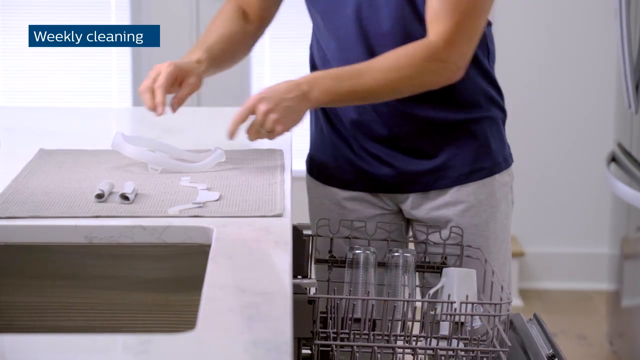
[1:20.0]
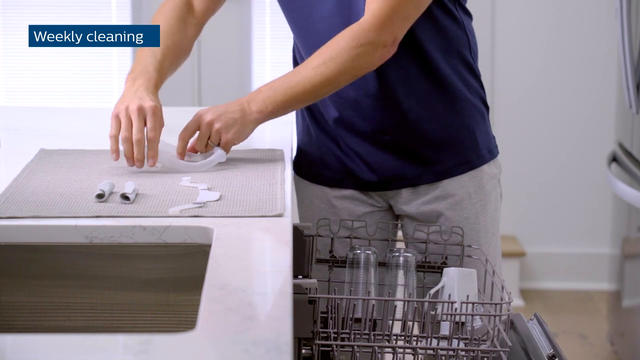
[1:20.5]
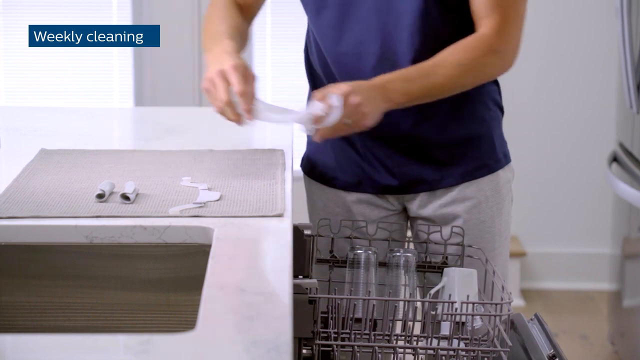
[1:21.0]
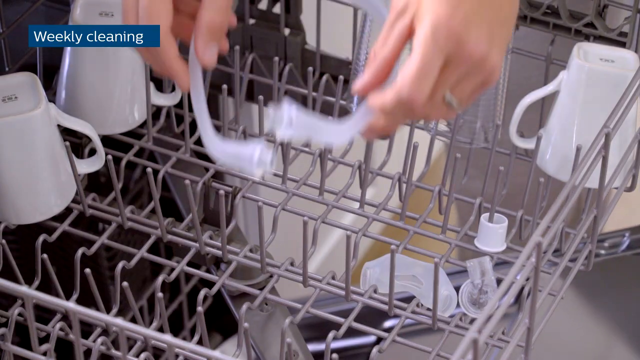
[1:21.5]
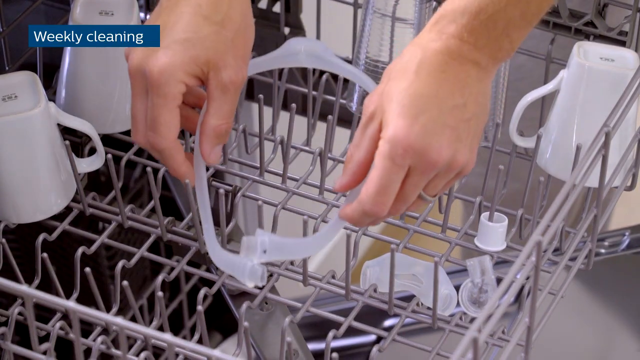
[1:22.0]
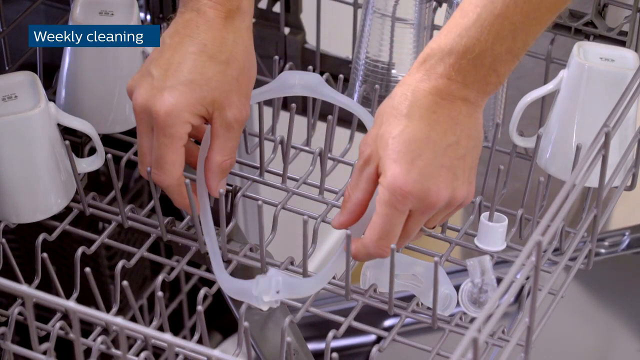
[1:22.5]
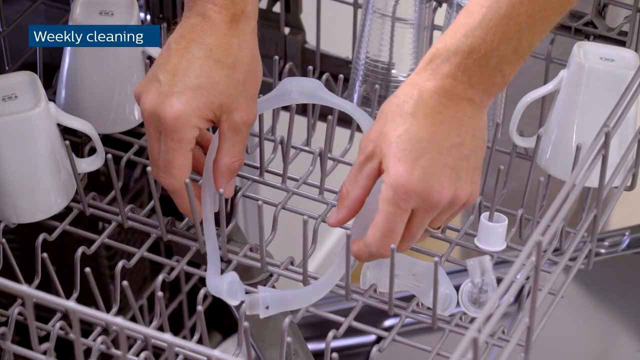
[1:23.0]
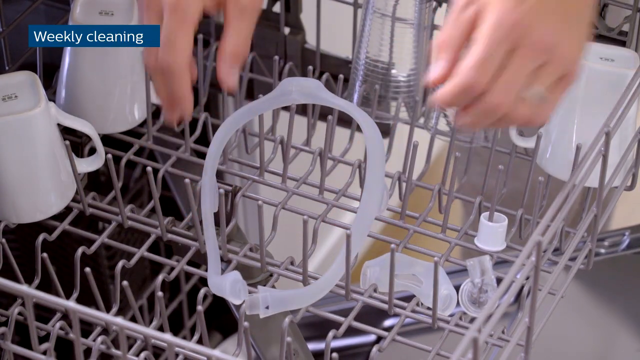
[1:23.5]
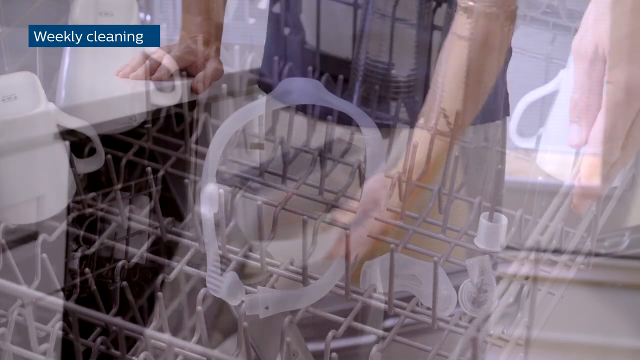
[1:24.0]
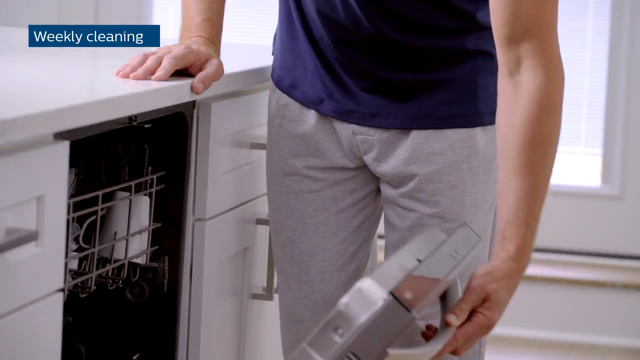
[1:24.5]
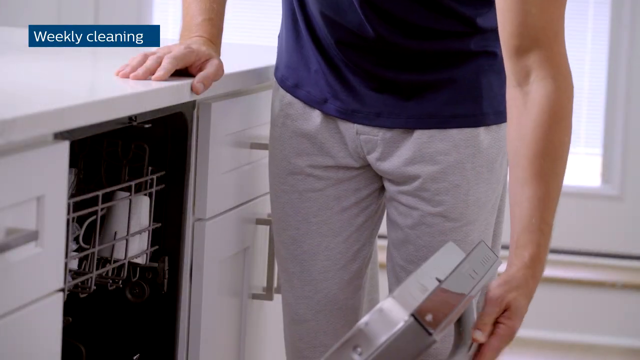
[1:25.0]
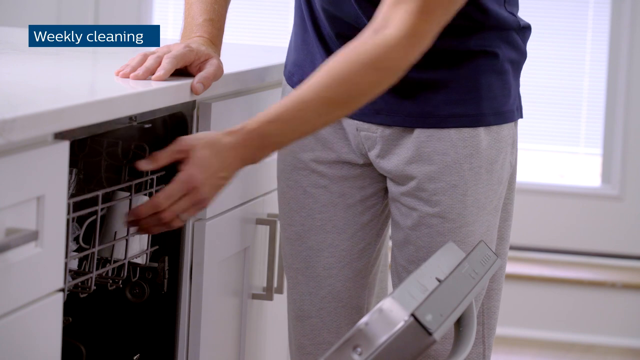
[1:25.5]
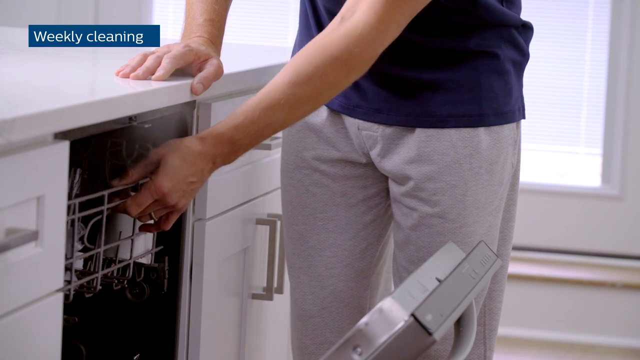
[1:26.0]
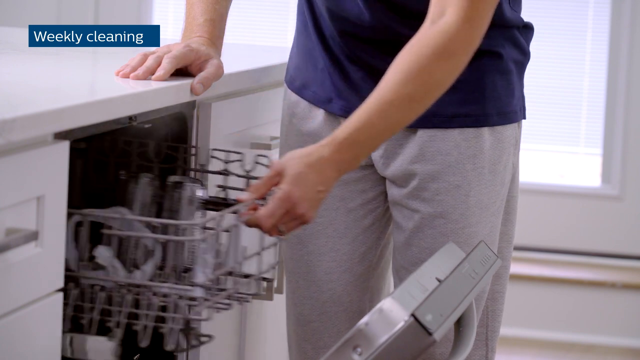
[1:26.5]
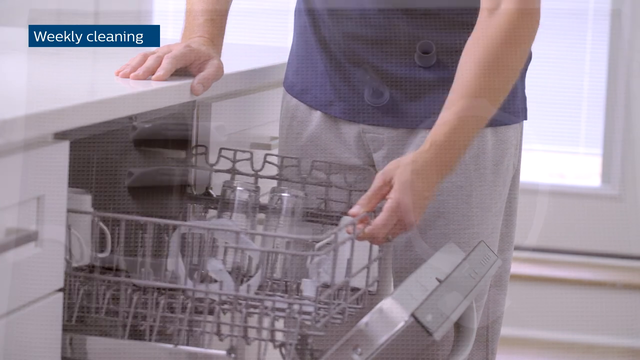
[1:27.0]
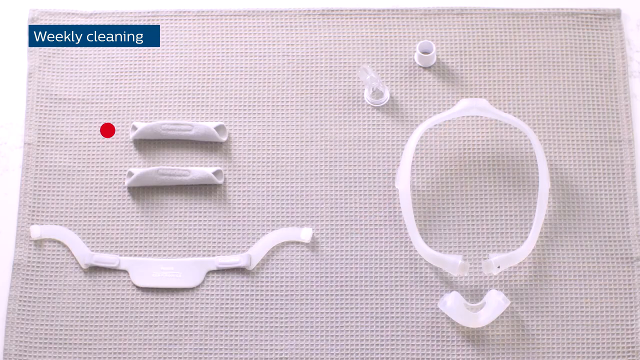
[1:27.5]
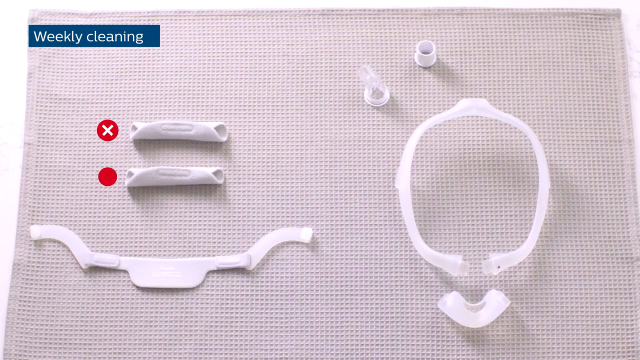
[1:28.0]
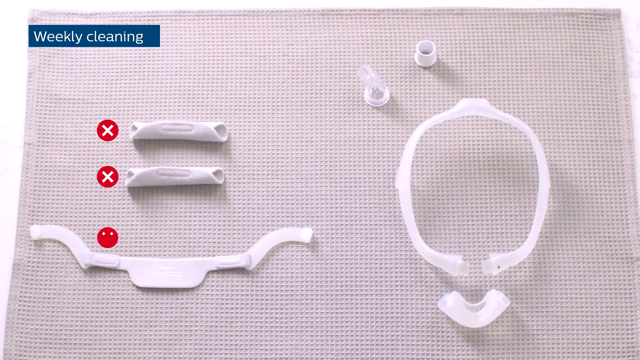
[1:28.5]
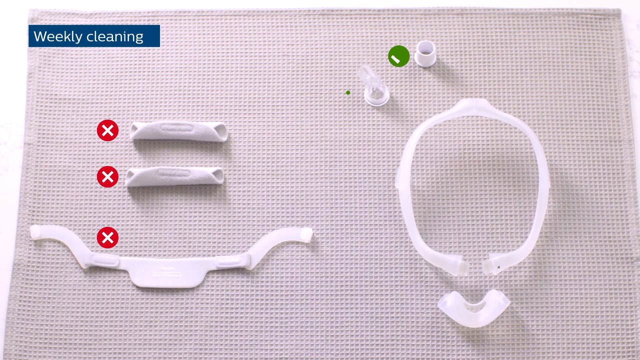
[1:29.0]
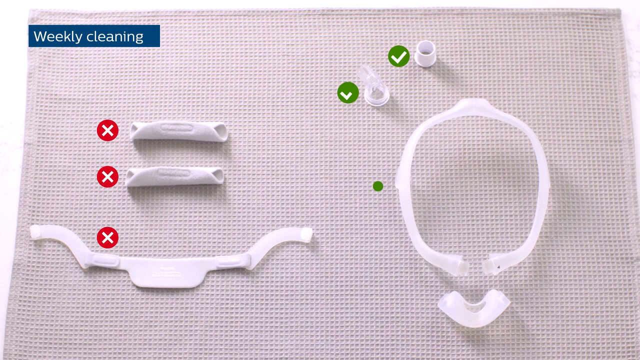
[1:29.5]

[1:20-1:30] The man puts more parts of the mask into the dishwasher, lifting one up and putting it in. A closer shot shows the dishwasher where he has placed it, and he pulls the dishwasher back out by the handle. Next, many of the parts are laid out on some sort of mat, with an indication of which parts are to be cleaned in this process and which are not; apparently the larger, sort of plastic parts are cleaned while the more solid white parts are kept away, so only about half the parts are cleaned. Later, he appears to set up some sort of bowl to clean more parts.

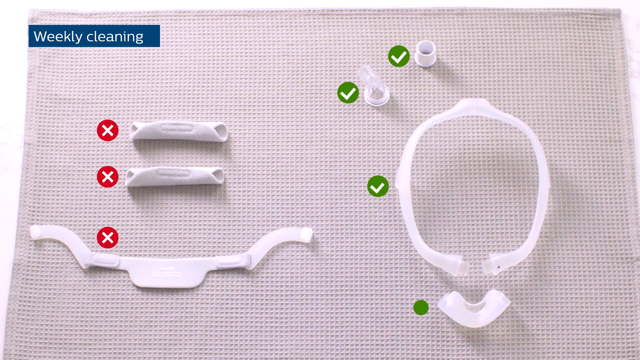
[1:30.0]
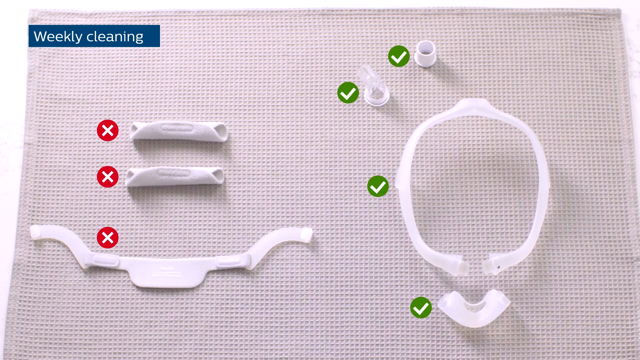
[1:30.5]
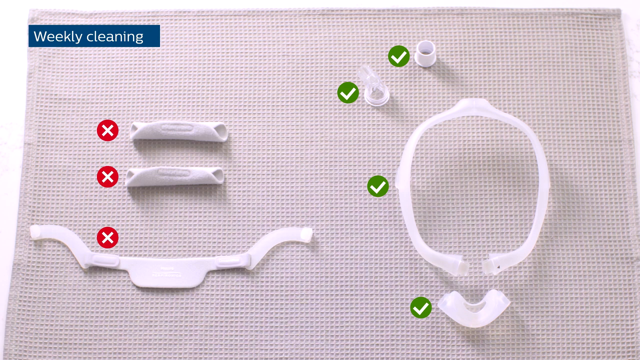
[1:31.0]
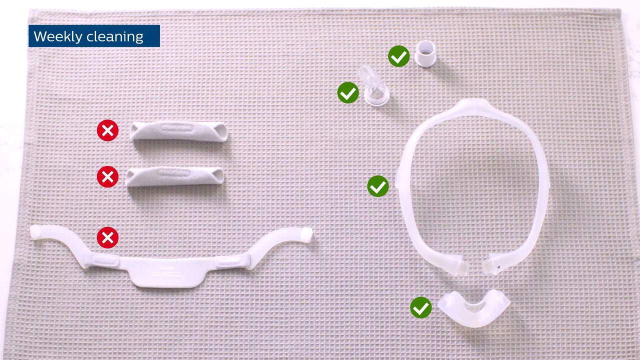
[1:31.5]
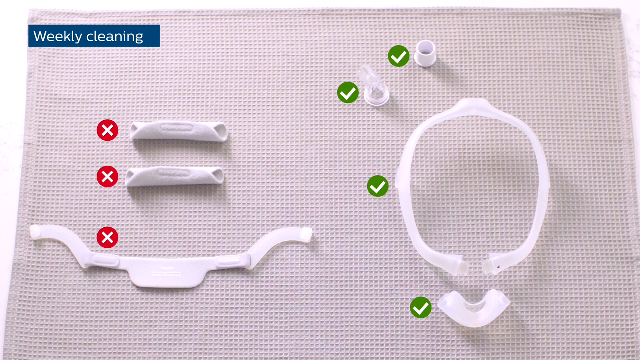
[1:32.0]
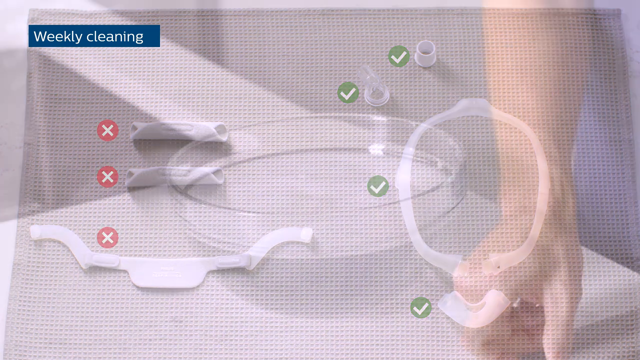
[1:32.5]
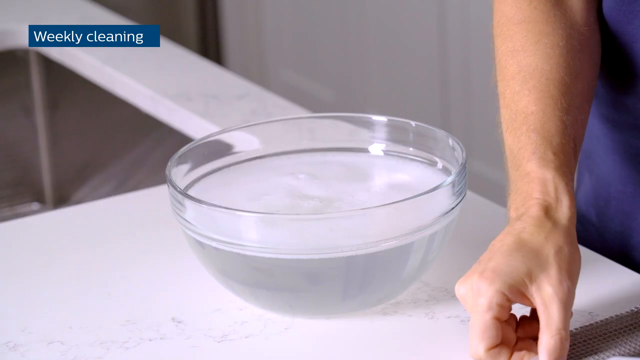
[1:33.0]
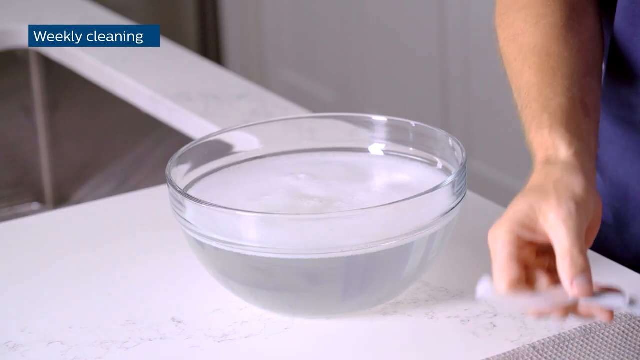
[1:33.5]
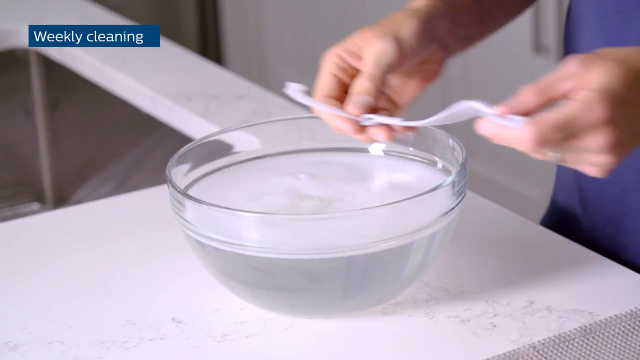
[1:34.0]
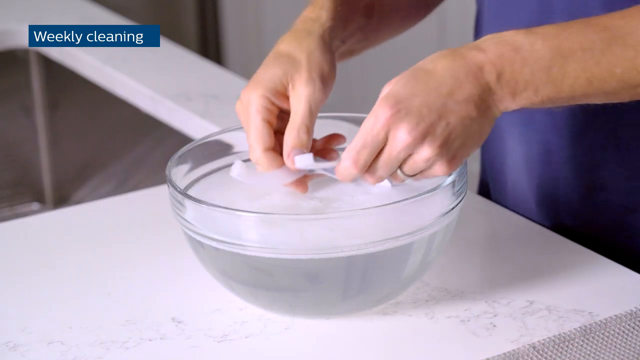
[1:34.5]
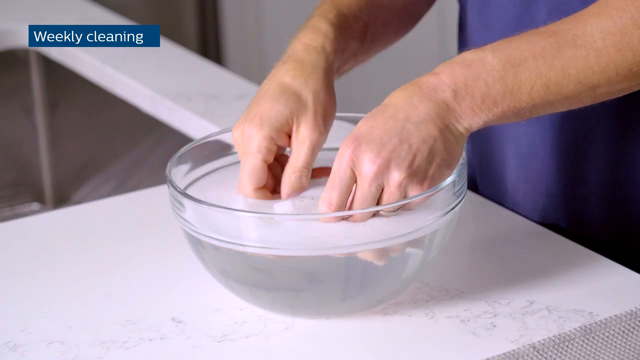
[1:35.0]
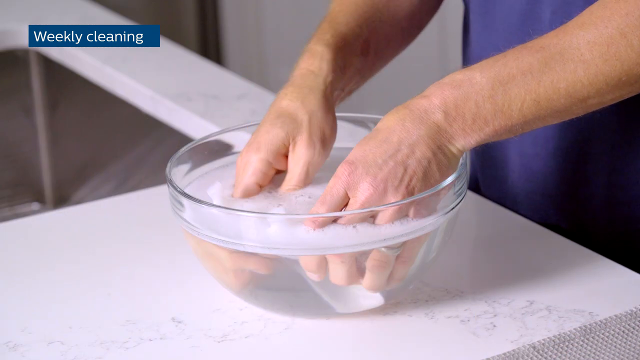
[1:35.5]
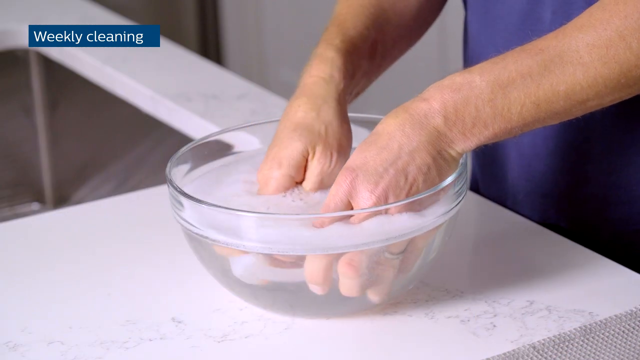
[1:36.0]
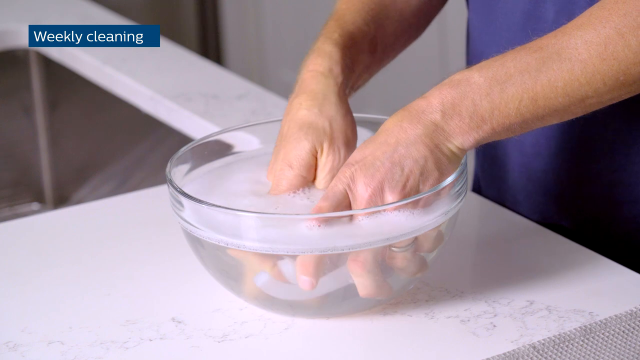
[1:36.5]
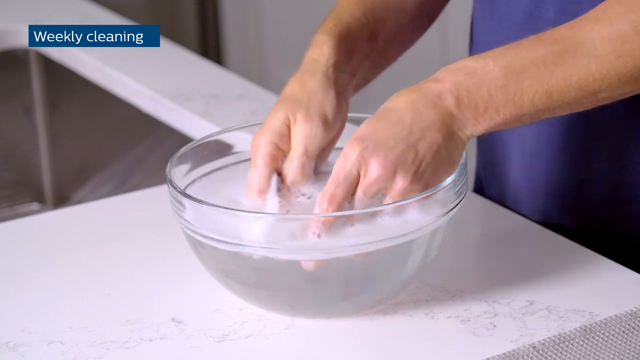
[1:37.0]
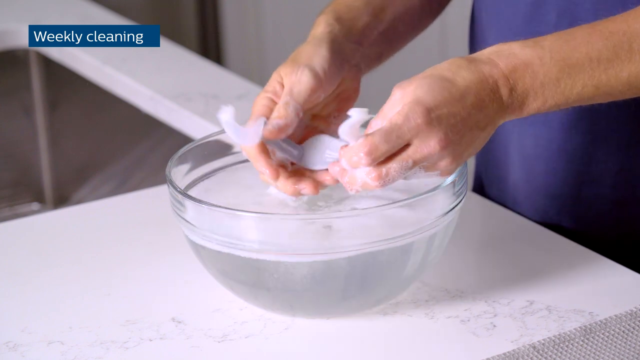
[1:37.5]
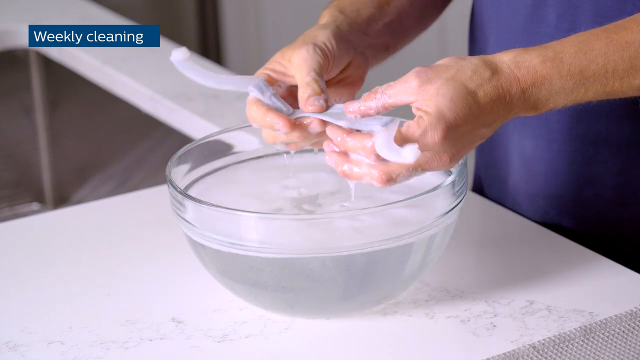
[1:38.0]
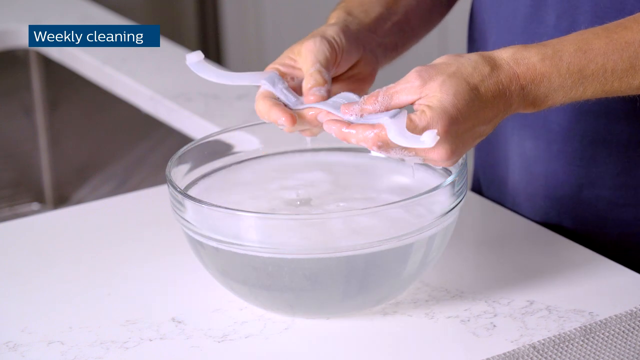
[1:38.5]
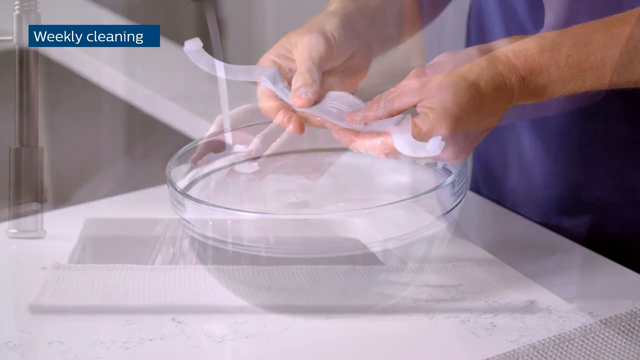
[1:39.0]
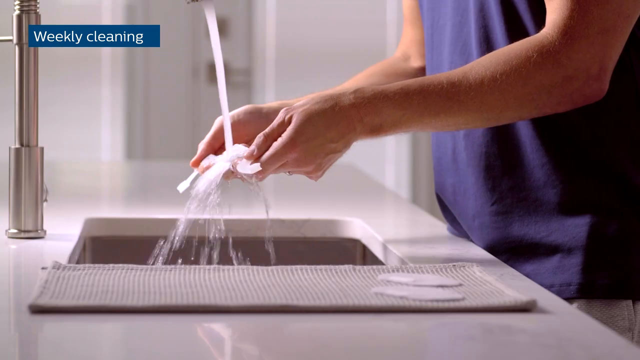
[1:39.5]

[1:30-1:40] The man begins putting more parts into the bowl he prepared. Meanwhile, white text on a blue banner at the top left reads "weekly cleaning". After putting the part in the bowl, he runs it under the faucet and rinses it off under the running water.